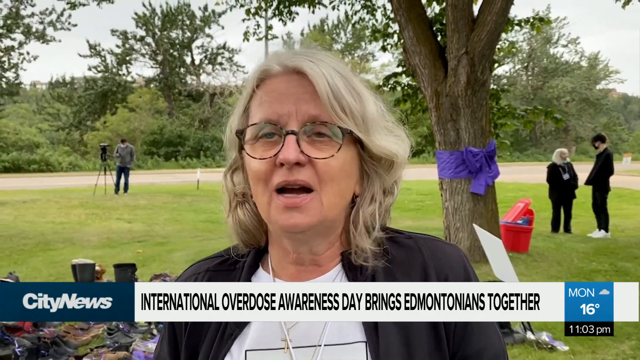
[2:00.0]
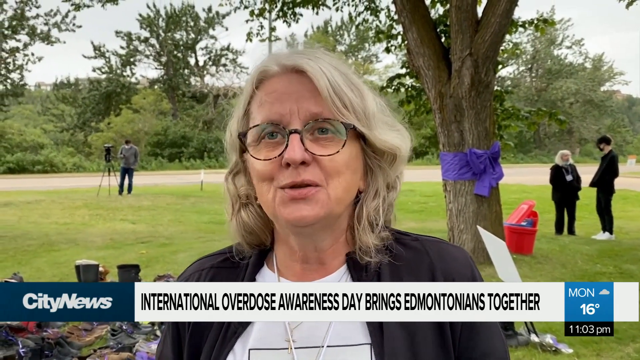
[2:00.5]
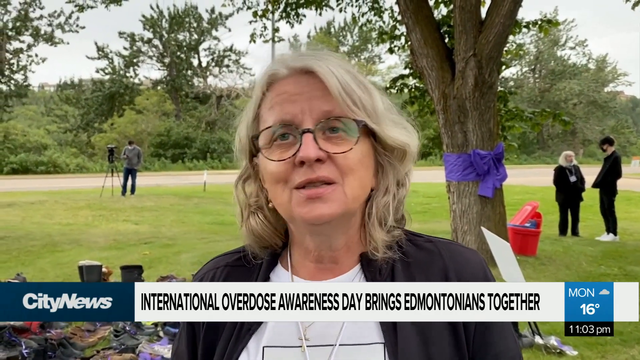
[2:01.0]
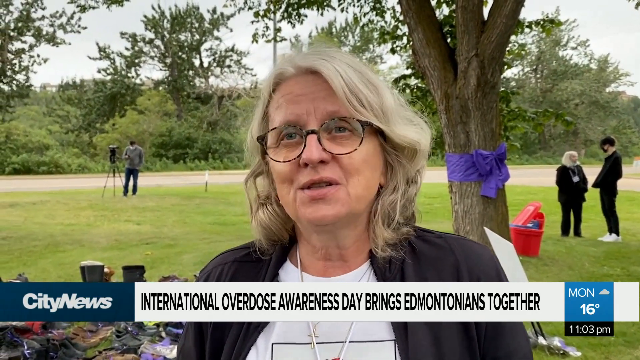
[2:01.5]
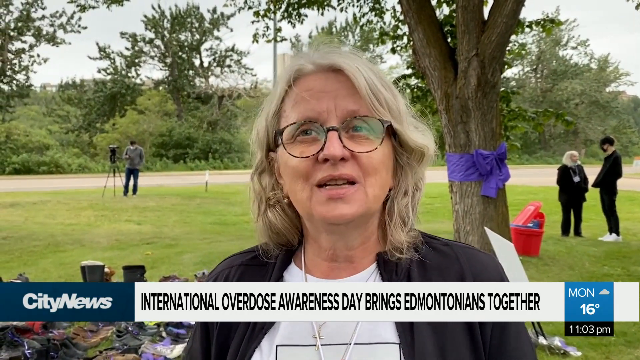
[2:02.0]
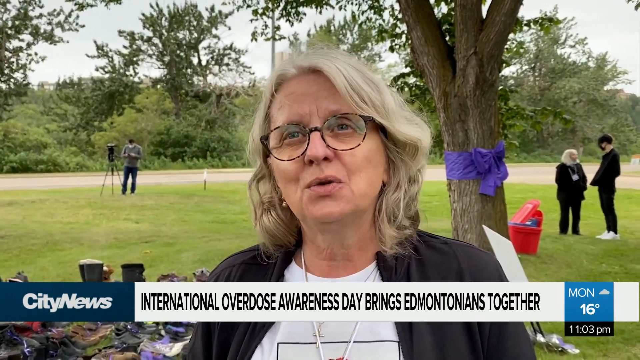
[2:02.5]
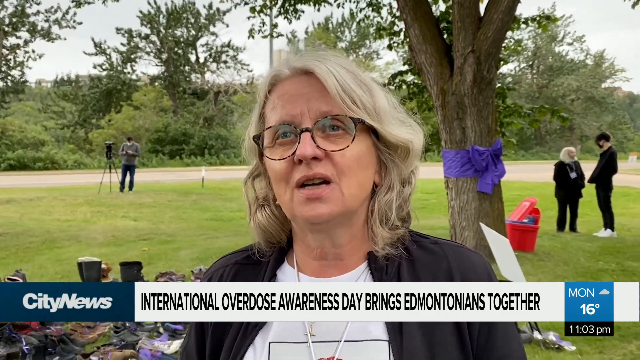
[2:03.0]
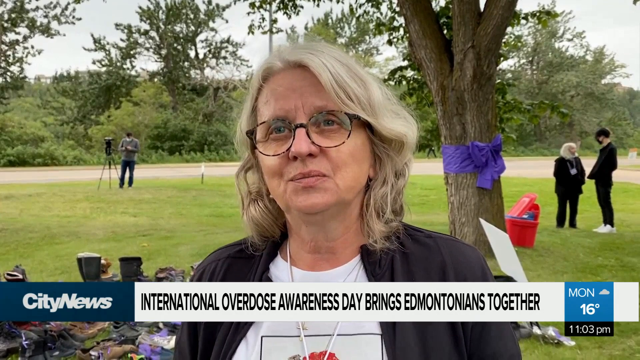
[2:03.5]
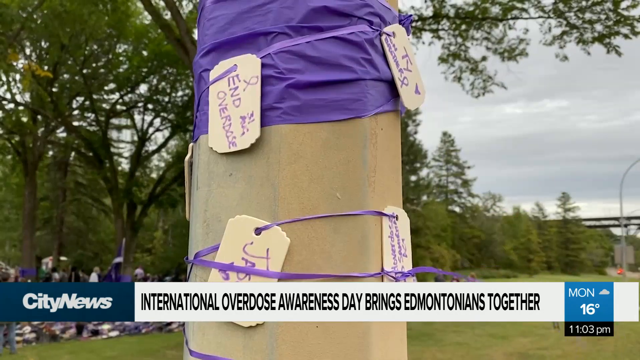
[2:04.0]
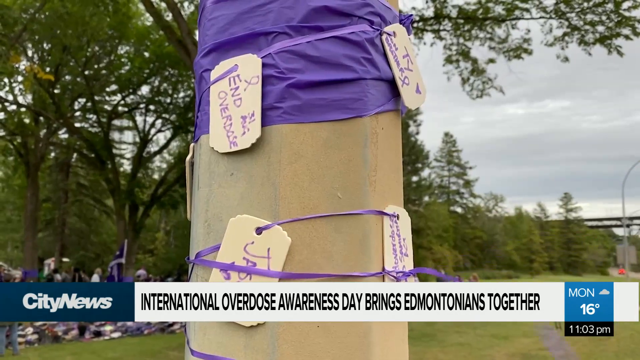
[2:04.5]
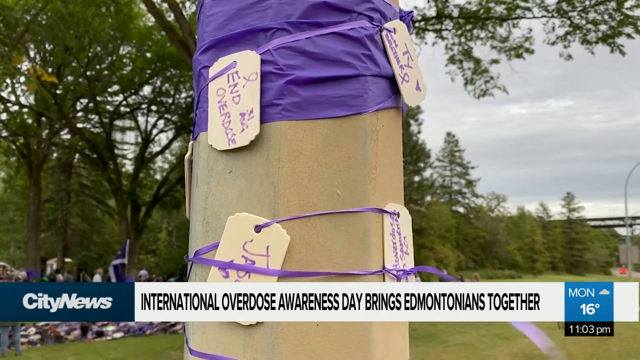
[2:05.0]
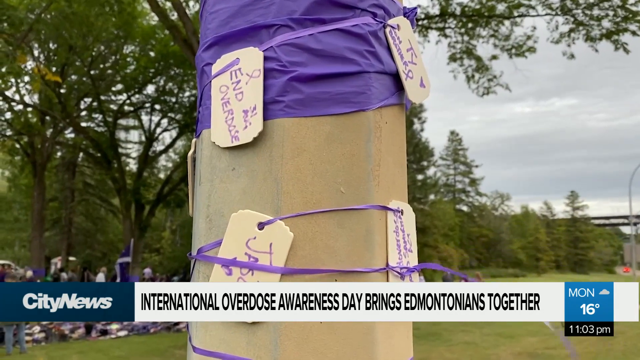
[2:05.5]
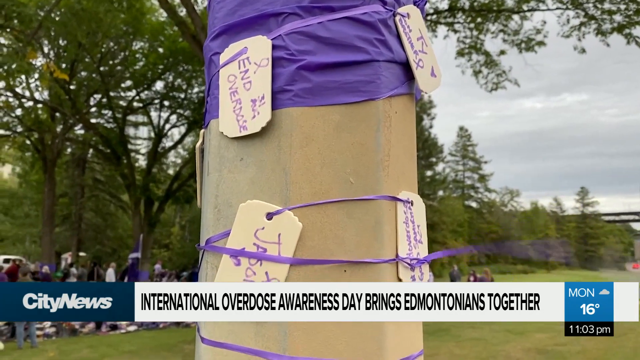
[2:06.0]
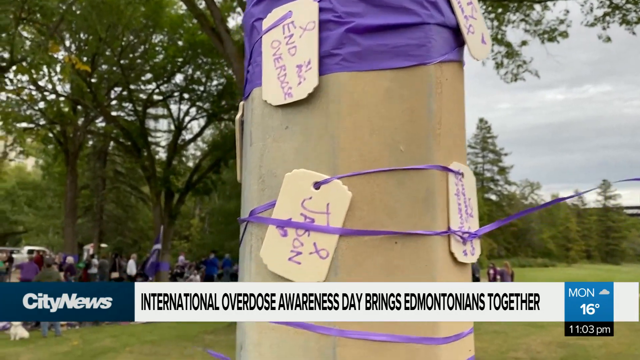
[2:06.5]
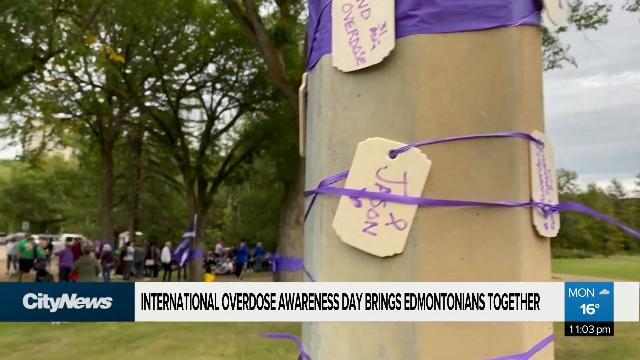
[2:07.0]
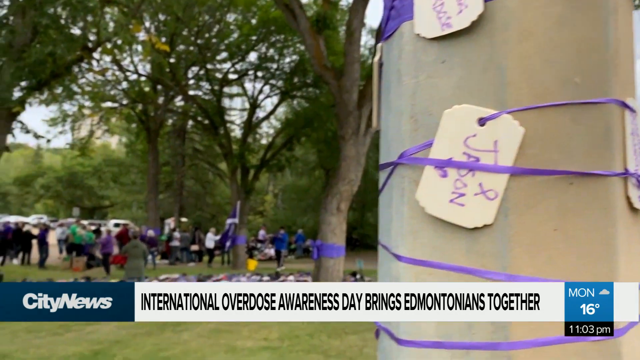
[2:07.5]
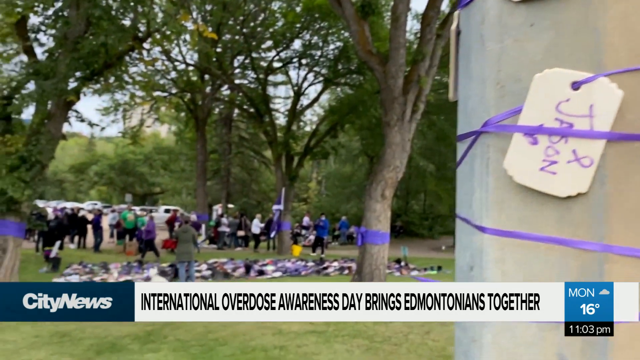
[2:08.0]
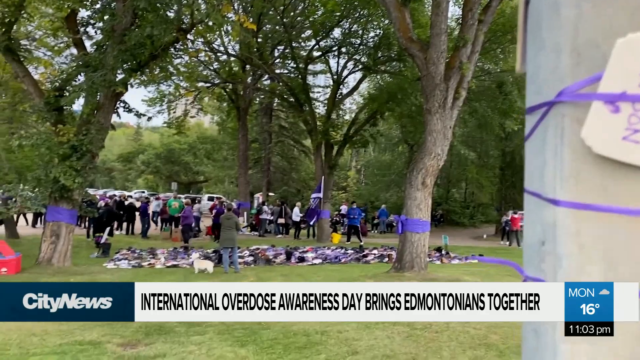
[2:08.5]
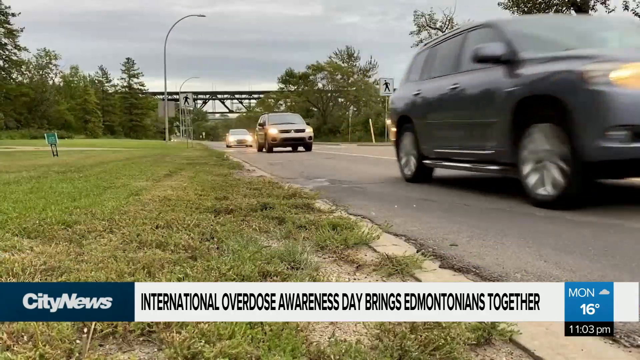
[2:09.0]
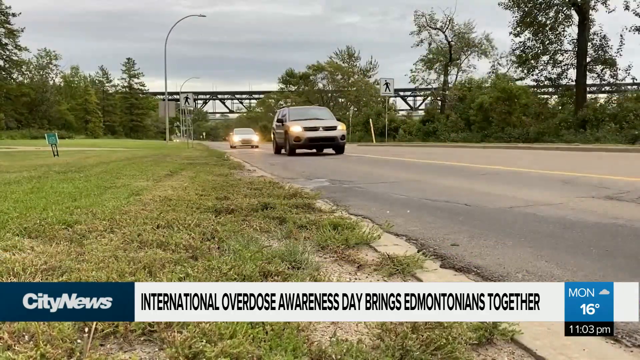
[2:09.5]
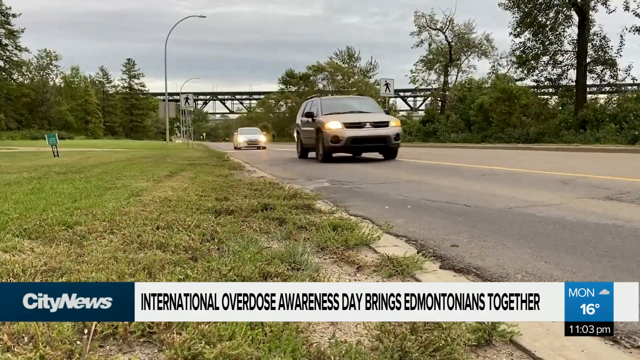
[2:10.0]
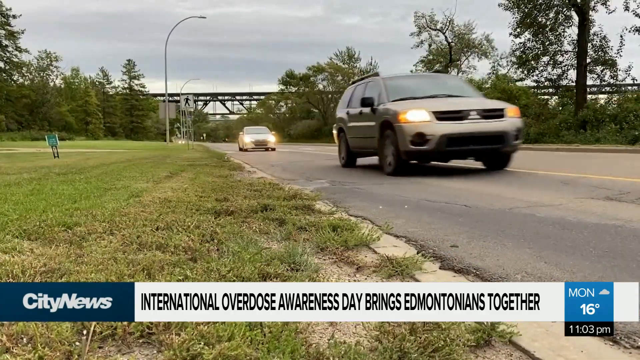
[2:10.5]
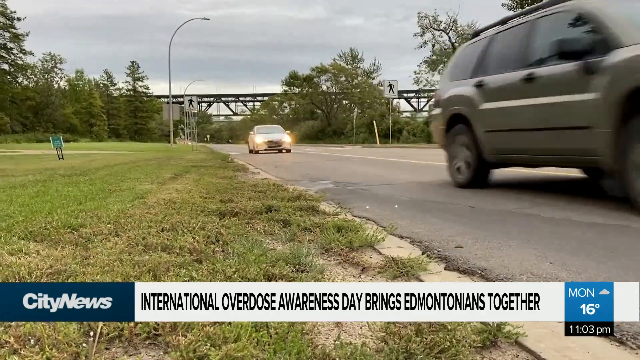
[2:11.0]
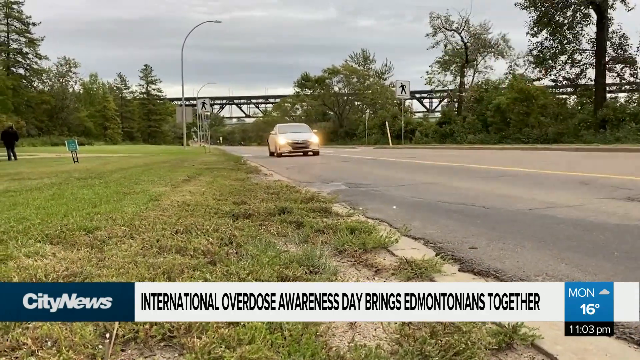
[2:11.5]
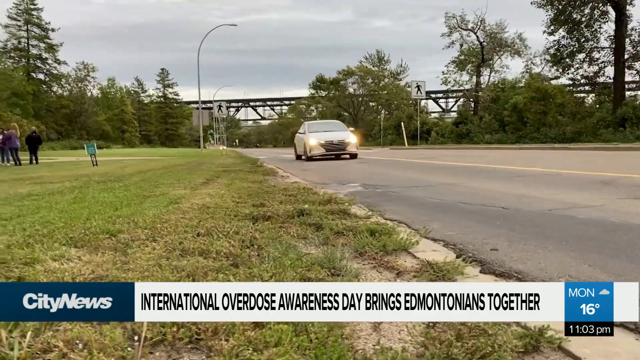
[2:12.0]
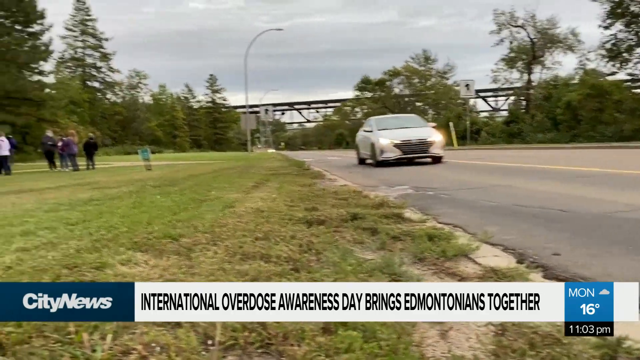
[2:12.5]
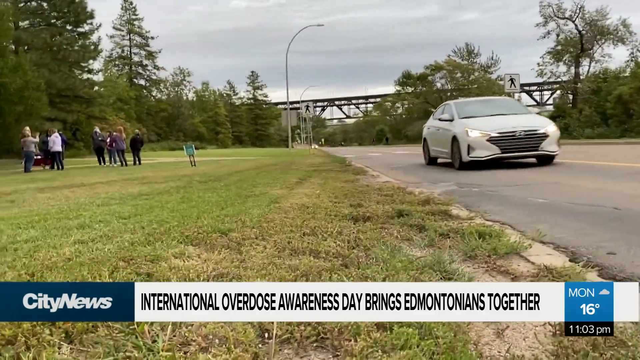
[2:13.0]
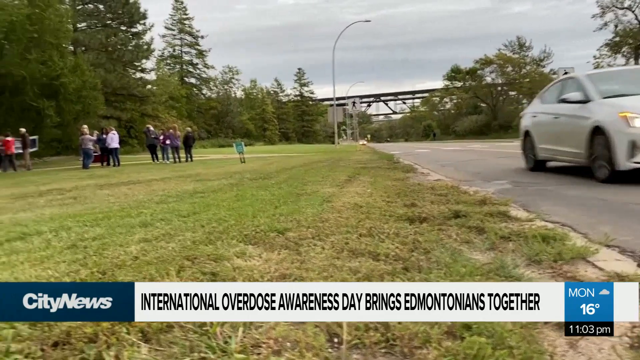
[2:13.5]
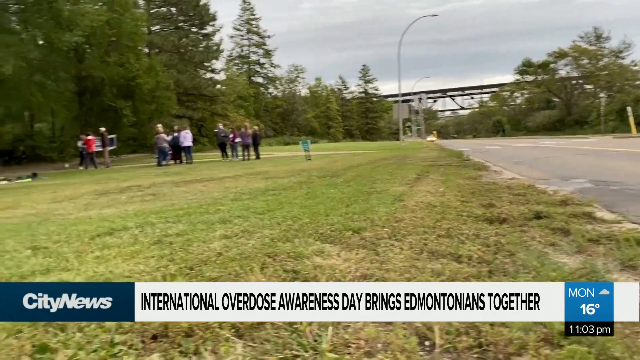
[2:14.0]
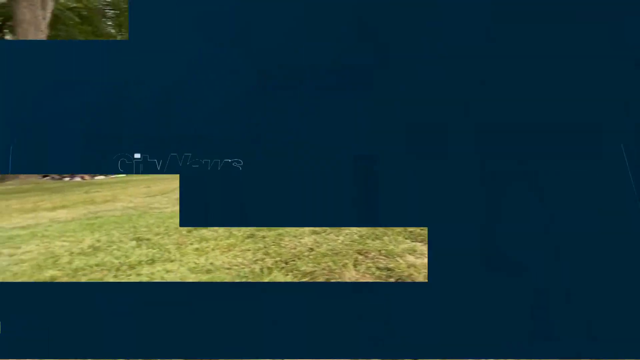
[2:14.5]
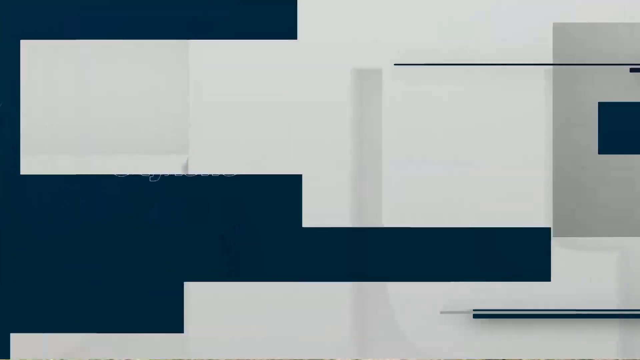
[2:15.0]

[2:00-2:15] A woman wearing glasses, a white t-shirt, a black jacket and a necklace talks on camera. In the background is a tree with a purple cloth tied on it, and two people standing, a woman and a man in black. A red object is seen. Someone stands next to the road with a camera stand, apparently a camera person. City News is displayed on the screen with the headline "International Overdose Awareness Day brings Edmontonians together," along with the day, Monday, 16 degrees Celsius, and the time, 11. An electric pole is shown with tags bearing writing tied to it with a rope. Vehicles pass on the road with their headlights on, and some people are in a field. The video ends with a blue background with white strips and "City News" written on it.